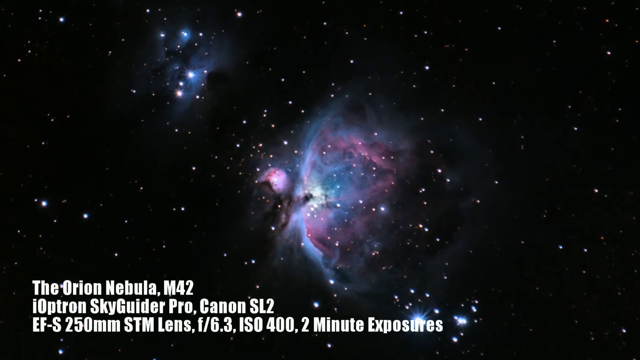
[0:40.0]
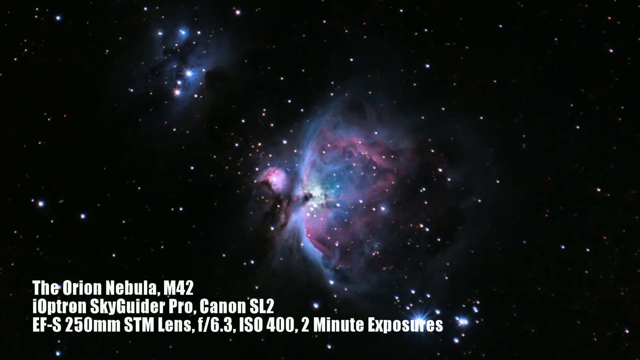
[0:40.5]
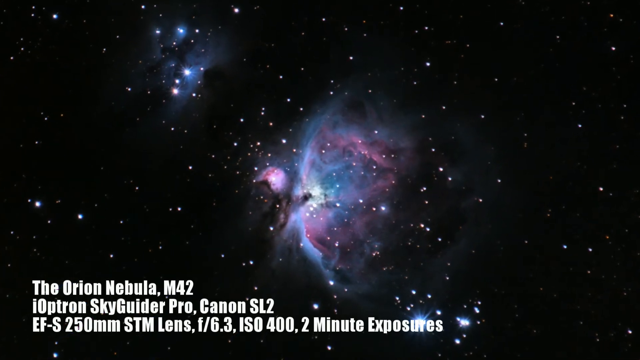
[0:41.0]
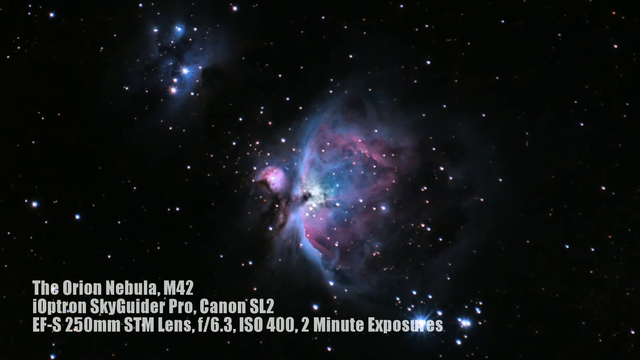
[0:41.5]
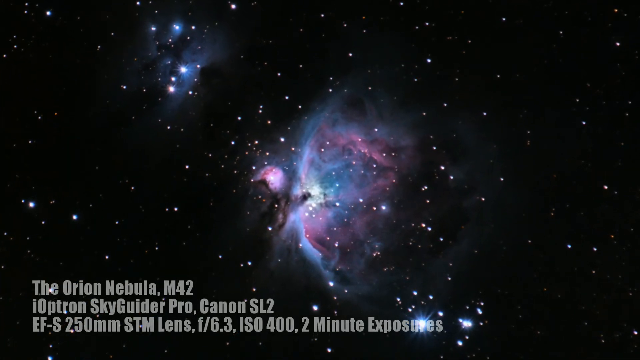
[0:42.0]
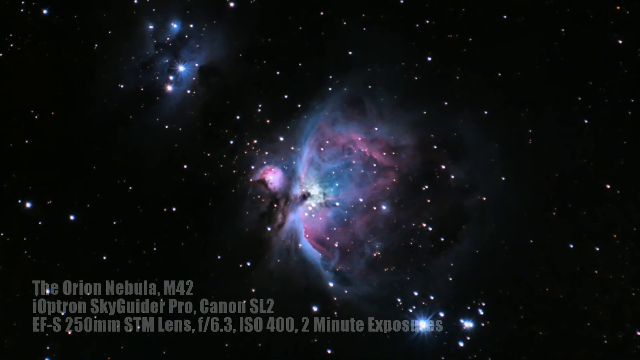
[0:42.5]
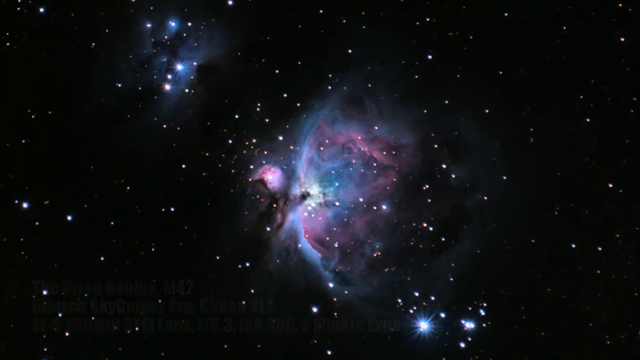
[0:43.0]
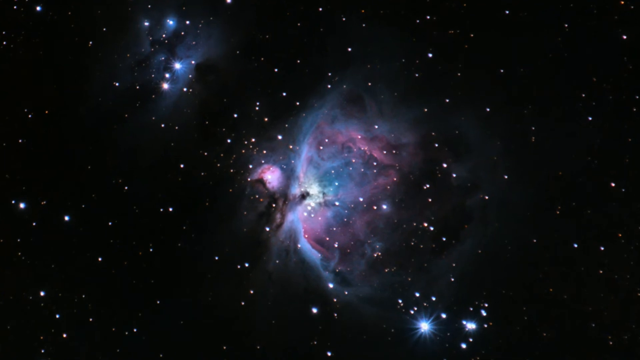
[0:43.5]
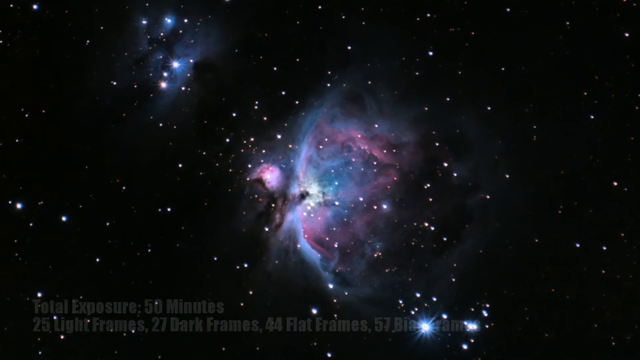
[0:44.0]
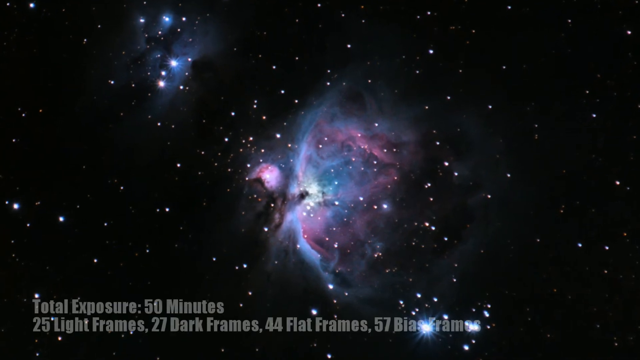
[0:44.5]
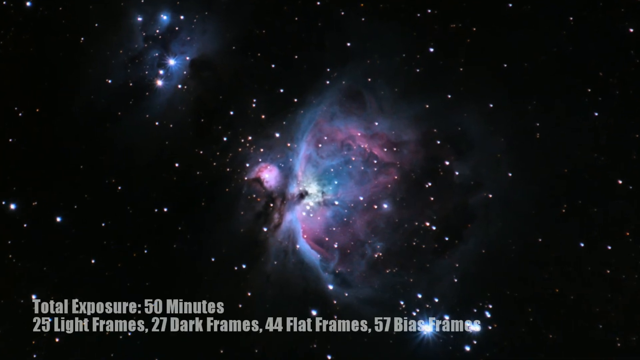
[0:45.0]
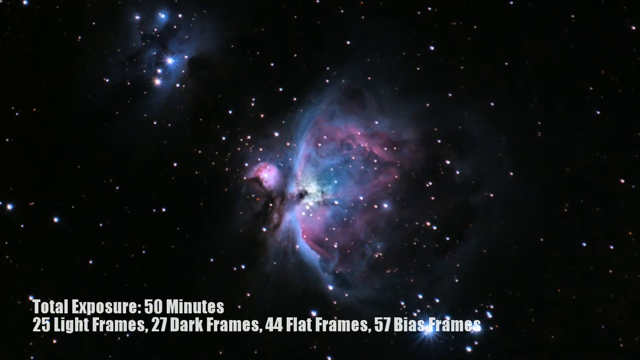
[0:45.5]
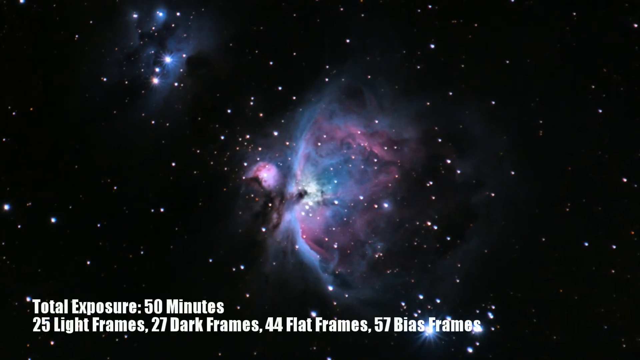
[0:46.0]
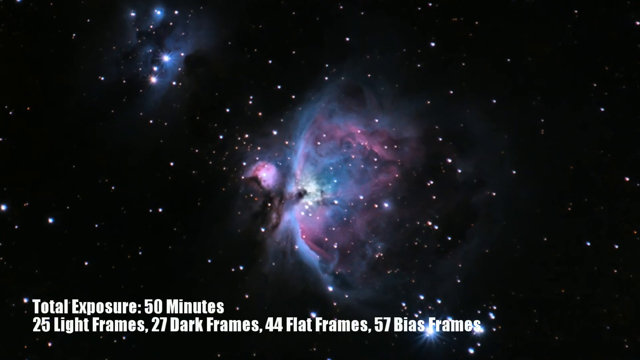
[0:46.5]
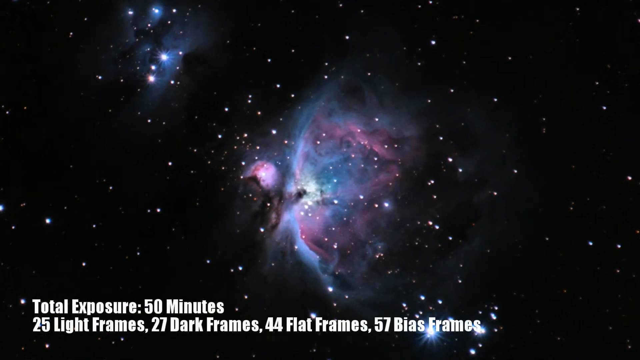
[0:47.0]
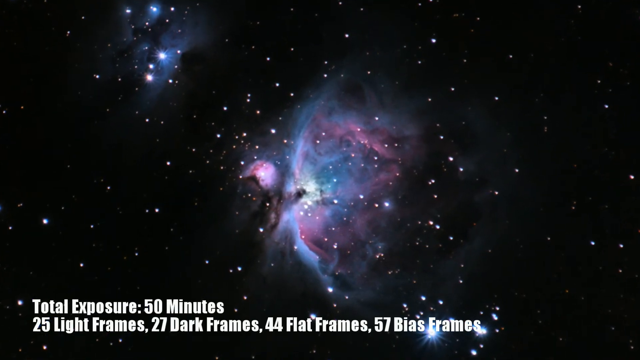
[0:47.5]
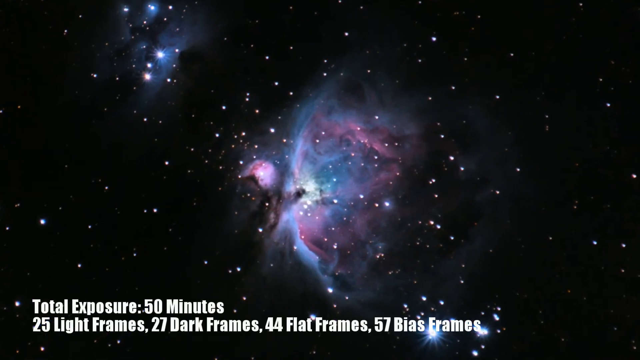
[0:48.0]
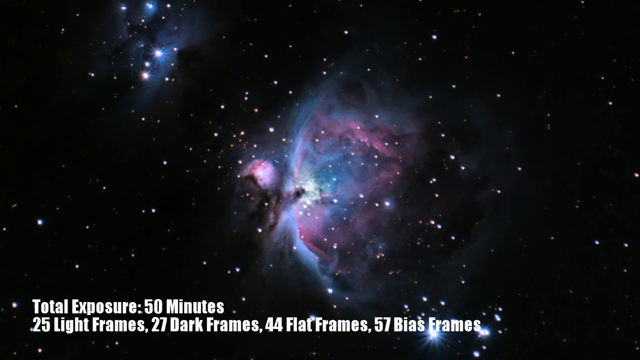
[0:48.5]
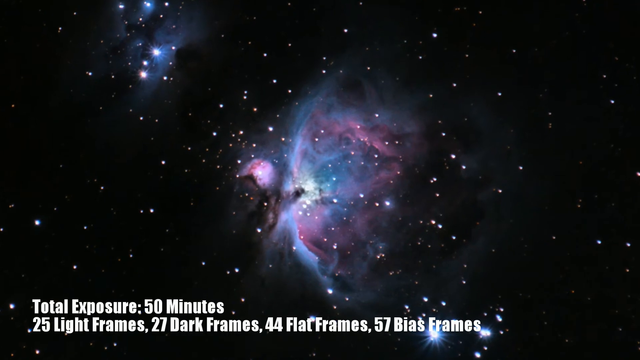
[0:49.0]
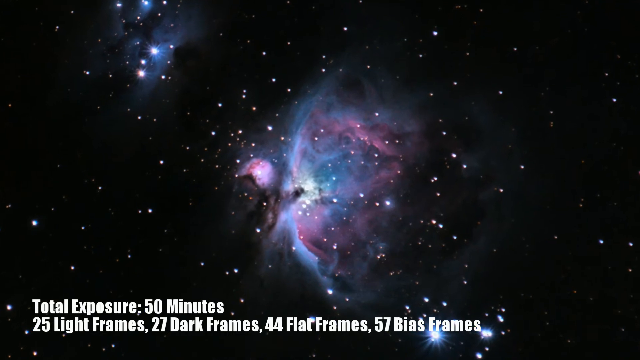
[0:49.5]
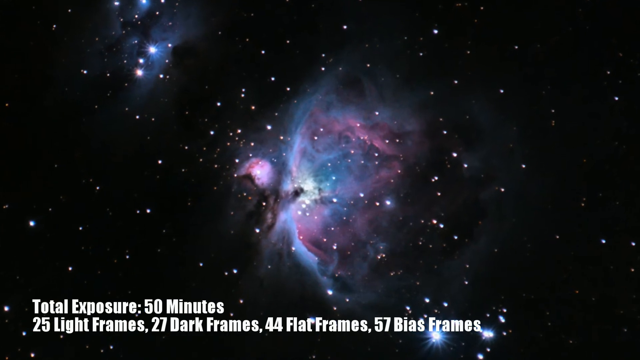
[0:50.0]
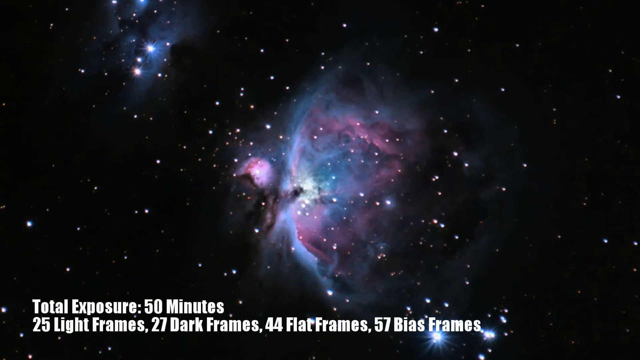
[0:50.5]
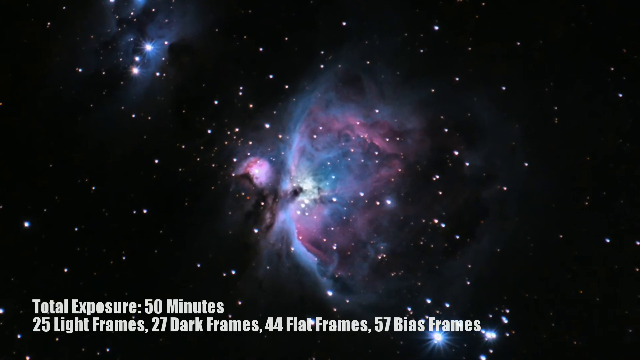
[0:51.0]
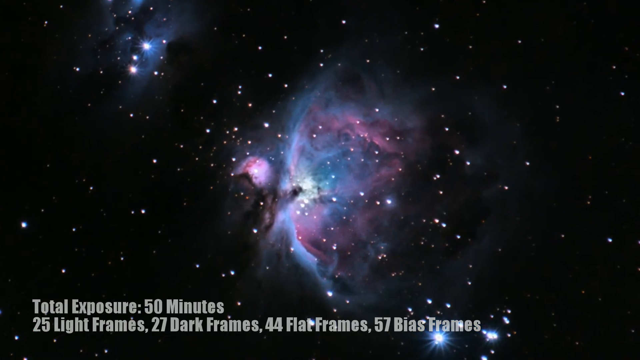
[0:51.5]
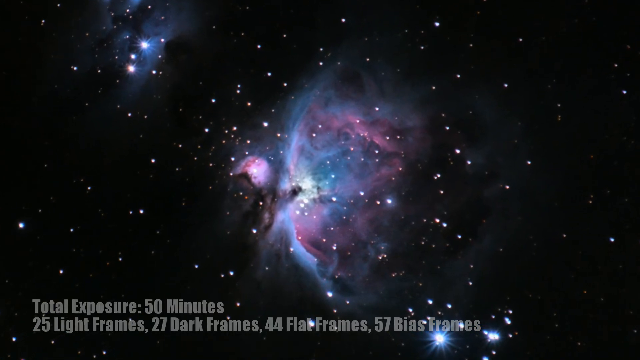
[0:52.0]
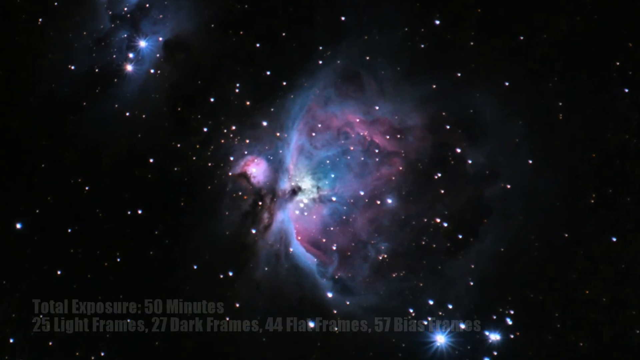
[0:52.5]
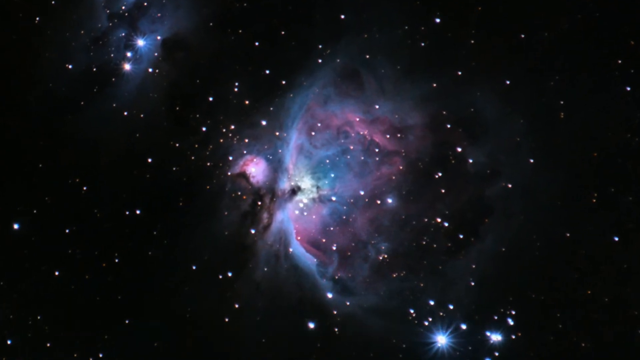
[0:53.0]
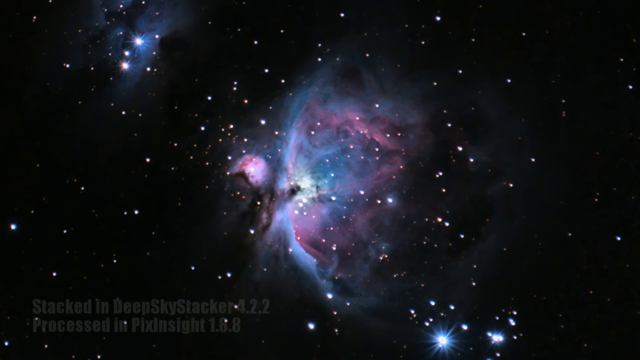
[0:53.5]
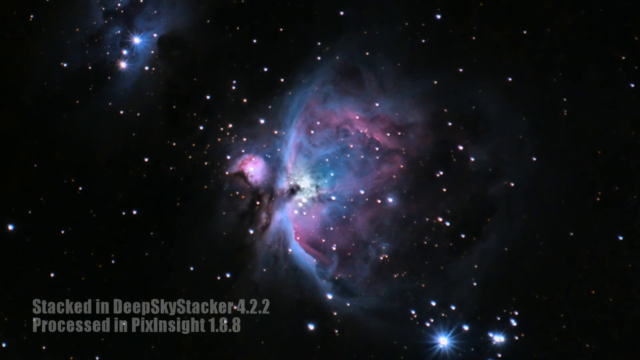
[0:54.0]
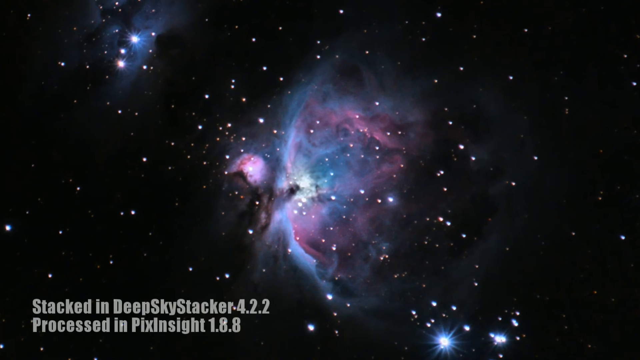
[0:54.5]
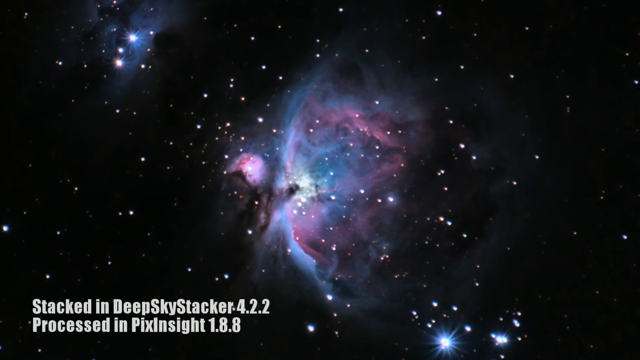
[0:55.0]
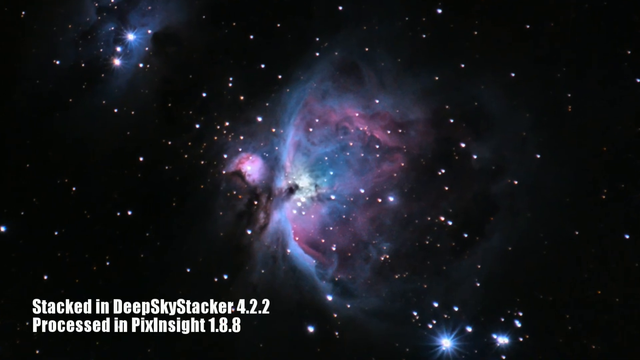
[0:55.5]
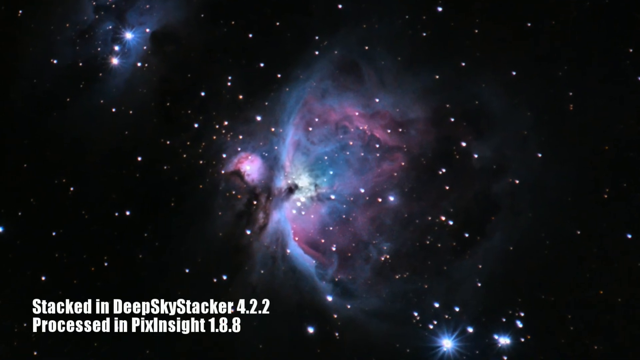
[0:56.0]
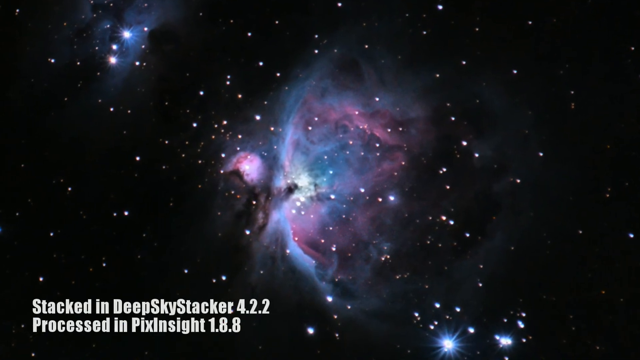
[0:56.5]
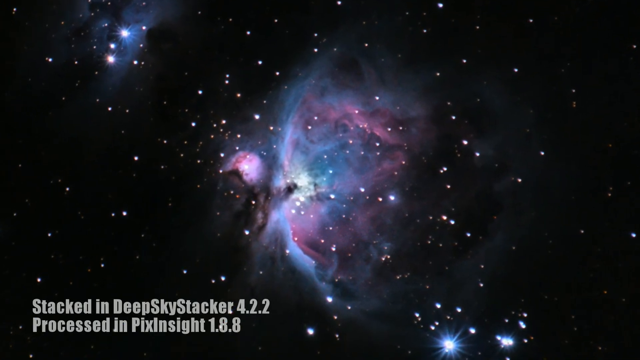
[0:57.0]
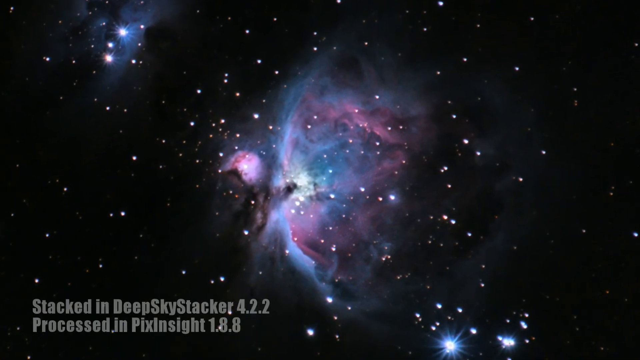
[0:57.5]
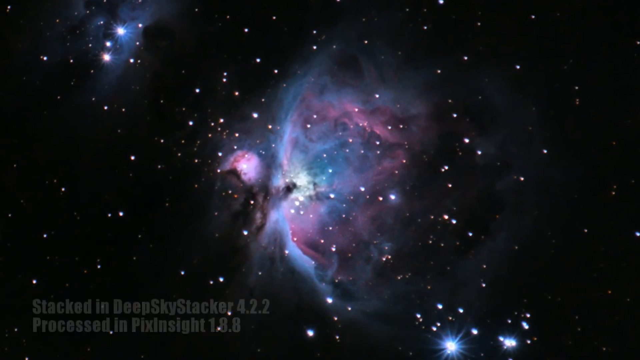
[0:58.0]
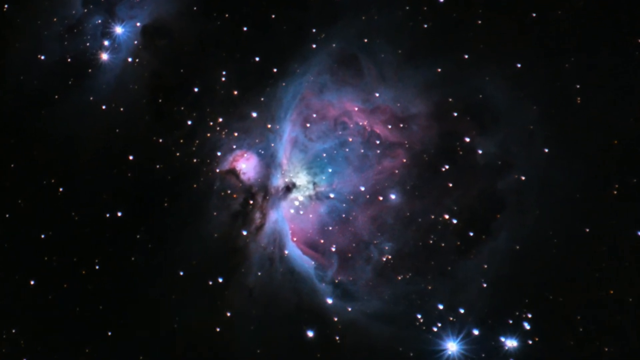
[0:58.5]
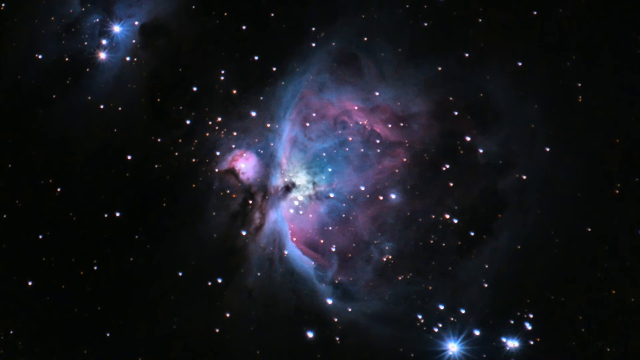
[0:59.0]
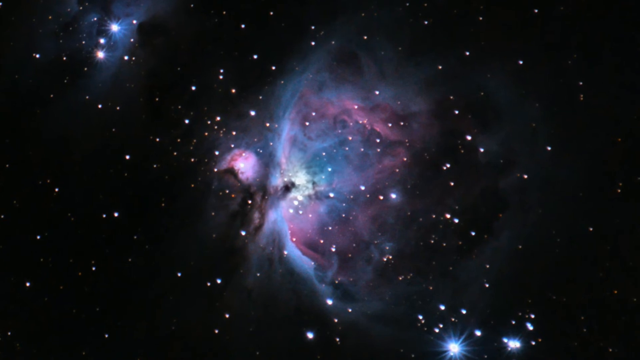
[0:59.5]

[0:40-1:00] The photograph of the stars in the sky and what looks like a nebula continues. The nebula is a bluish and purplish pink, made of different swirls of color; it is very pillowy and semi-transparent, with stars visible behind it. The stars against the black sky are different sizes, some very tiny and some a little bigger, all like little white pinpricks. A label at the bottom of the screen identifies it as the Orion Nebula, M42, and text lists "Ioptron Skyguider Pro, Canon SL2" and states that it is a two-minute exposure taken at f6.3 and ISO 400. Next, text gives a total exposure time of 50 minutes, with 25 light frames, 27 dark frames, 44 flat frames, and 57 bias frames. Then the text states that the photos were stacked in DeepSky Stacker 4.2.2 and processed in a program called PixInsight 1.8.8.